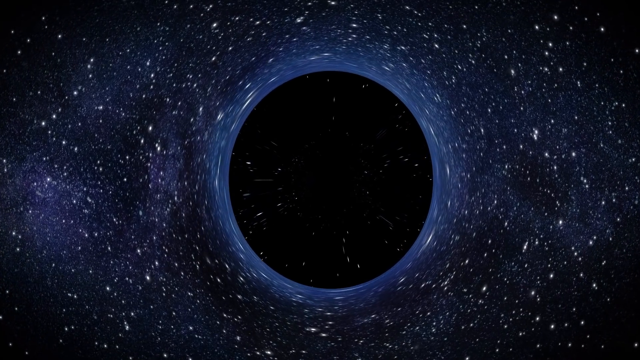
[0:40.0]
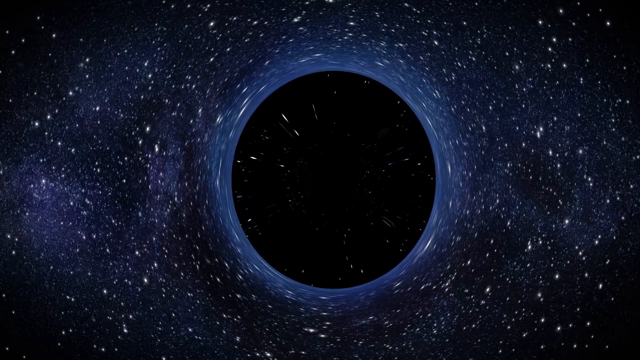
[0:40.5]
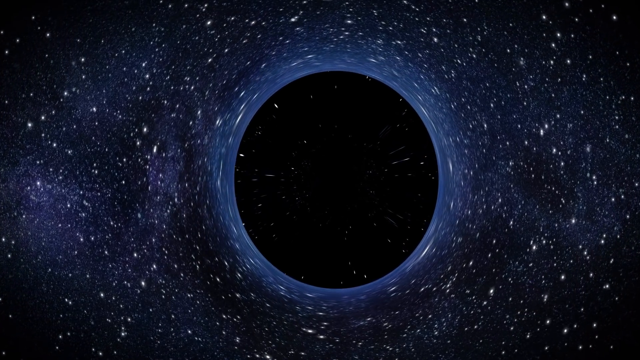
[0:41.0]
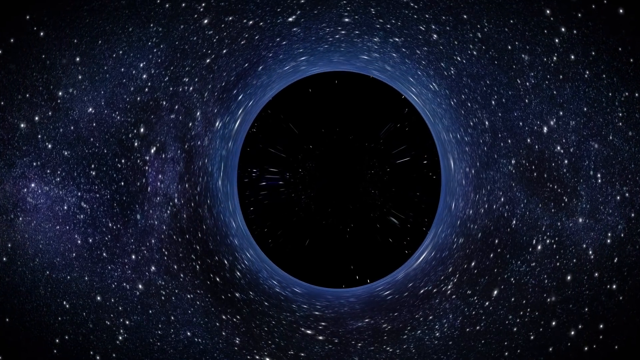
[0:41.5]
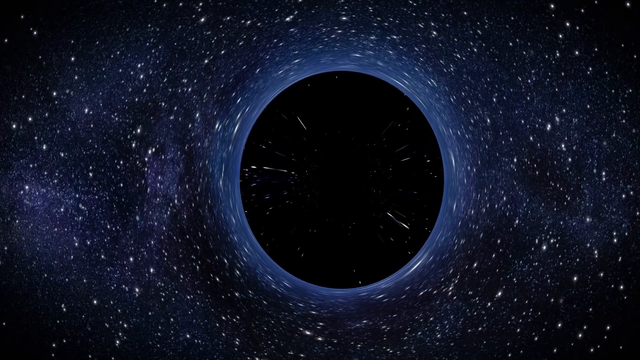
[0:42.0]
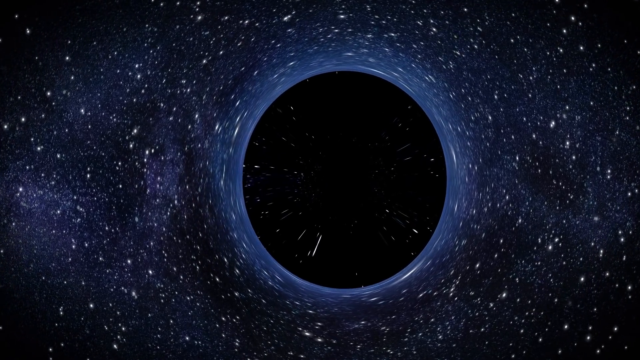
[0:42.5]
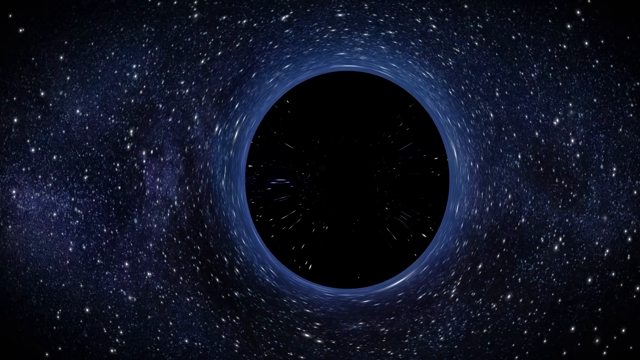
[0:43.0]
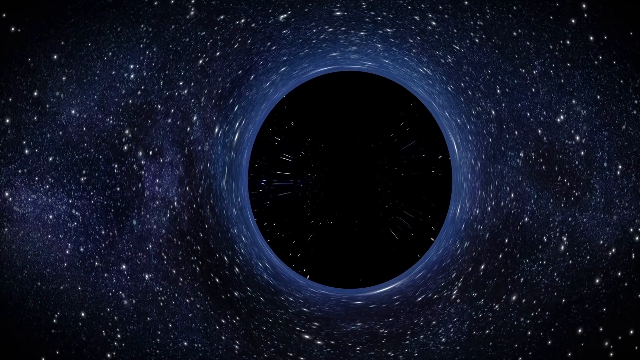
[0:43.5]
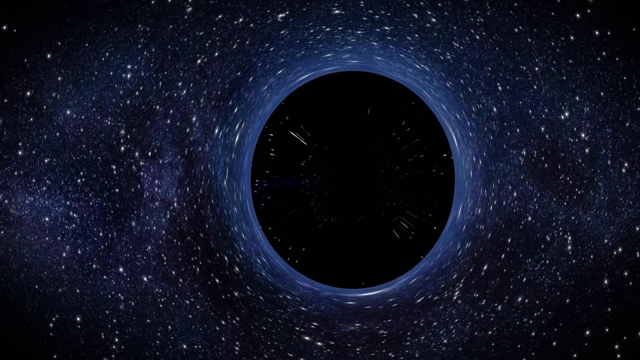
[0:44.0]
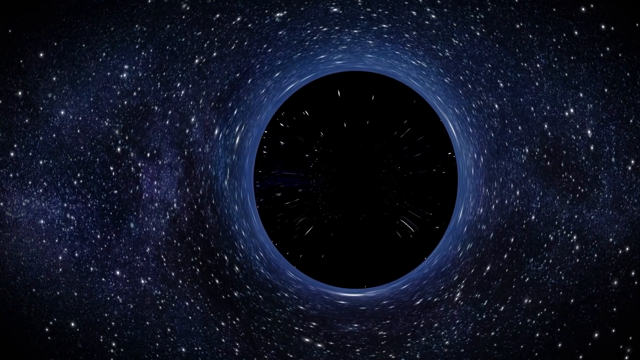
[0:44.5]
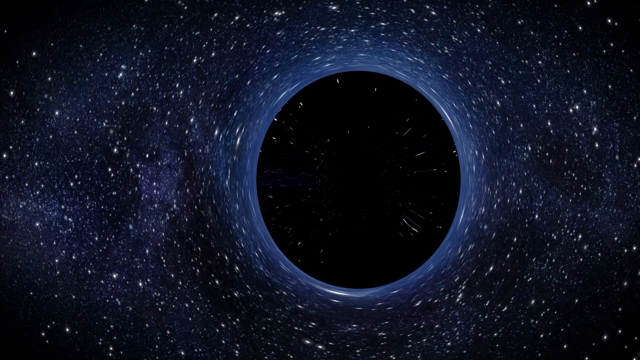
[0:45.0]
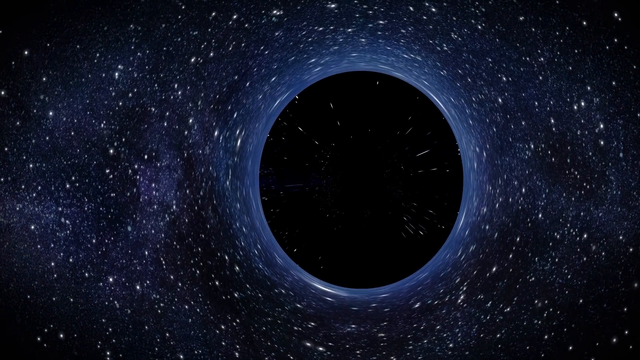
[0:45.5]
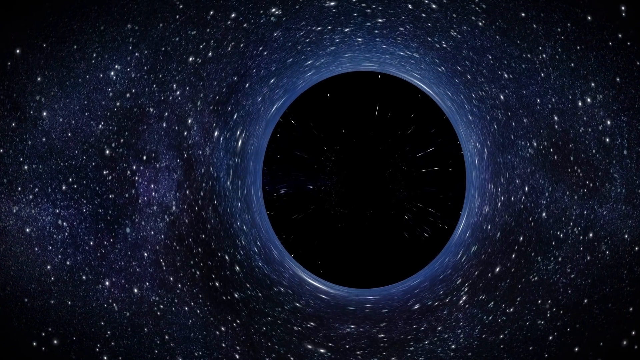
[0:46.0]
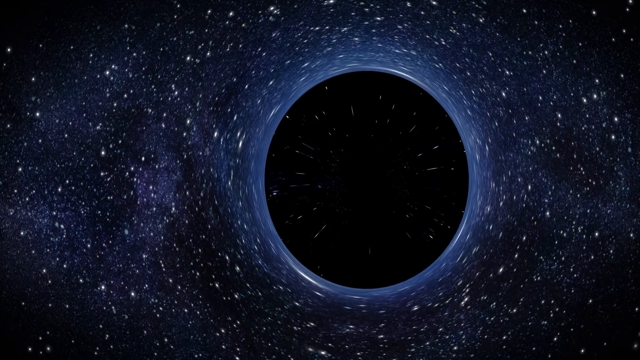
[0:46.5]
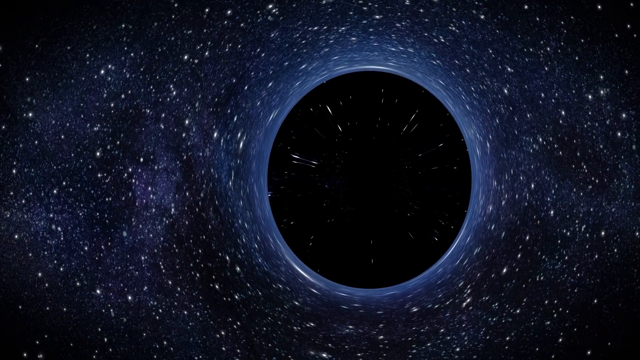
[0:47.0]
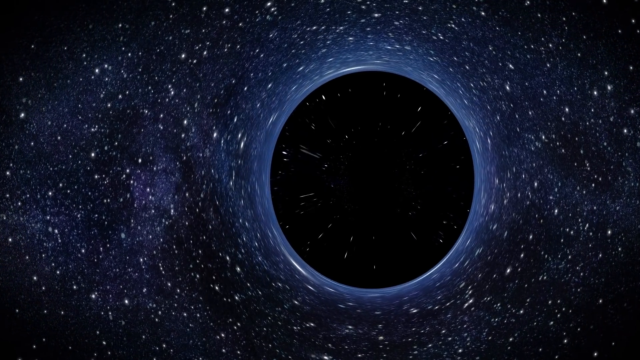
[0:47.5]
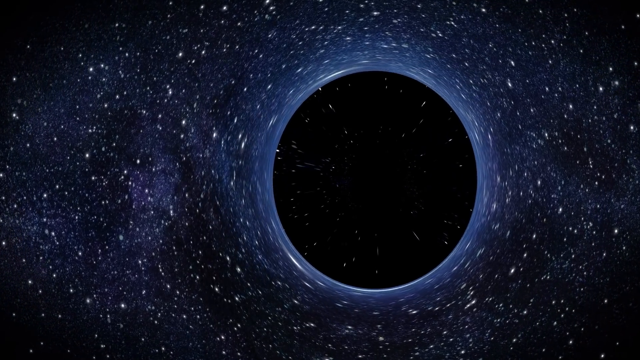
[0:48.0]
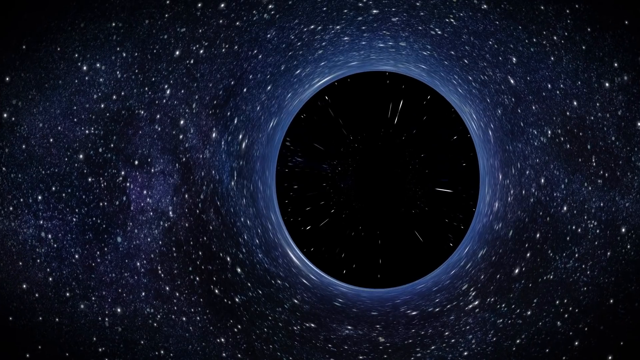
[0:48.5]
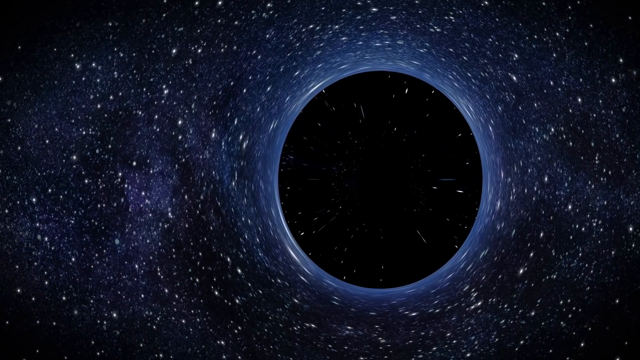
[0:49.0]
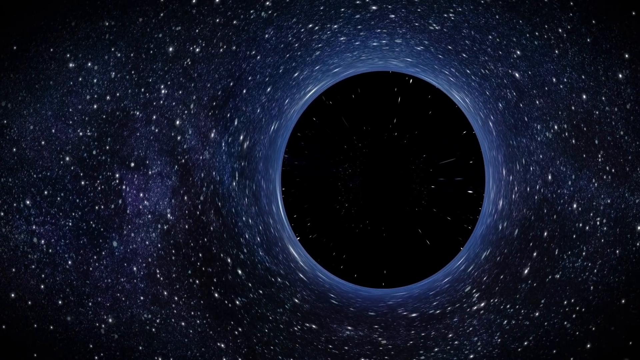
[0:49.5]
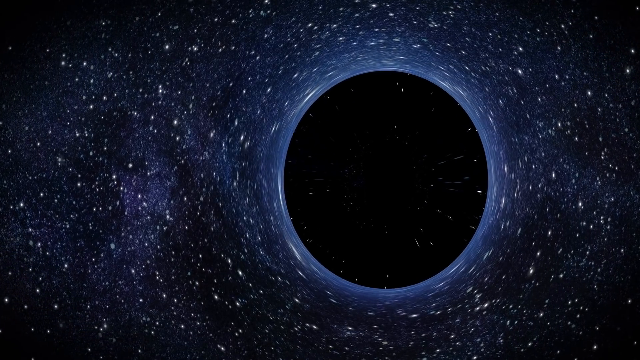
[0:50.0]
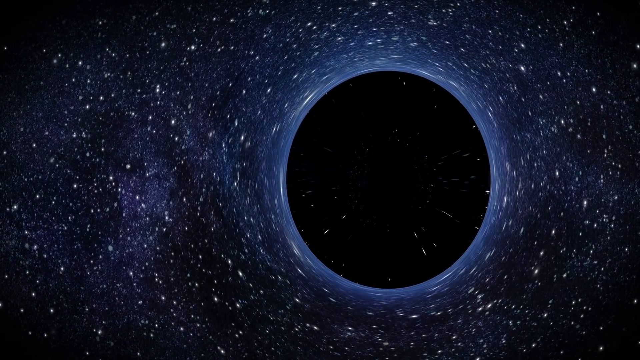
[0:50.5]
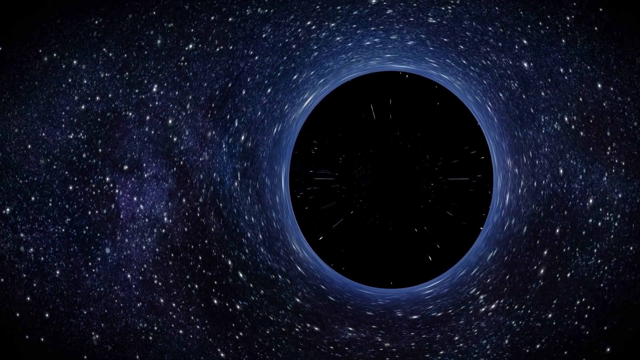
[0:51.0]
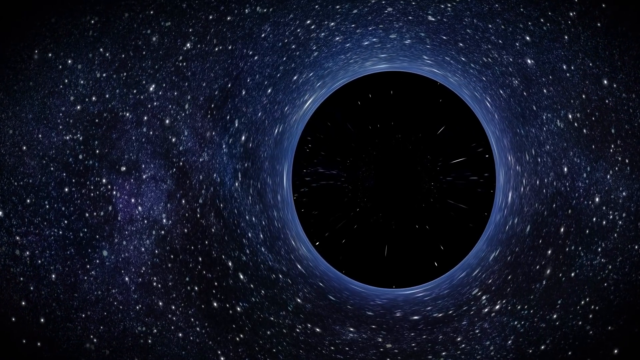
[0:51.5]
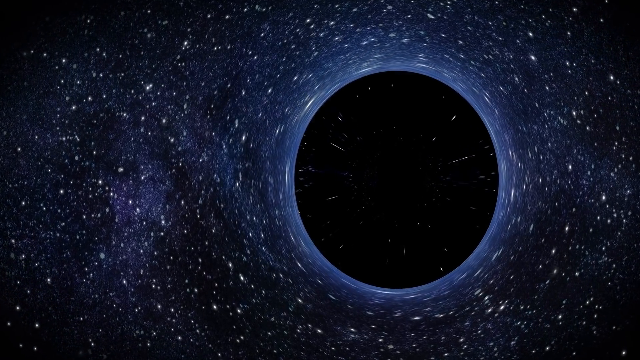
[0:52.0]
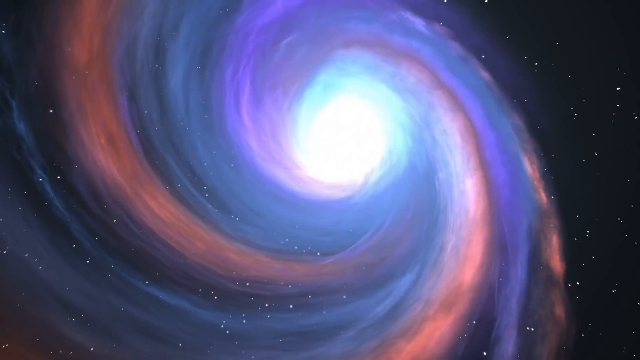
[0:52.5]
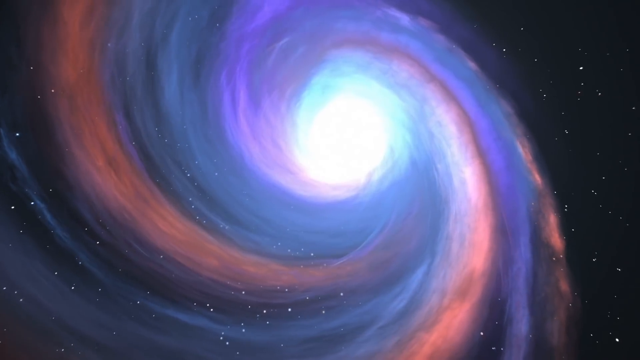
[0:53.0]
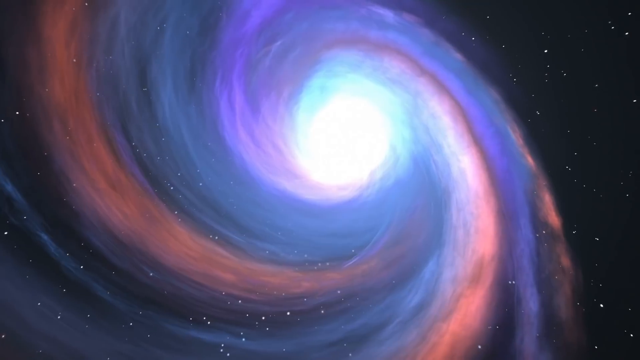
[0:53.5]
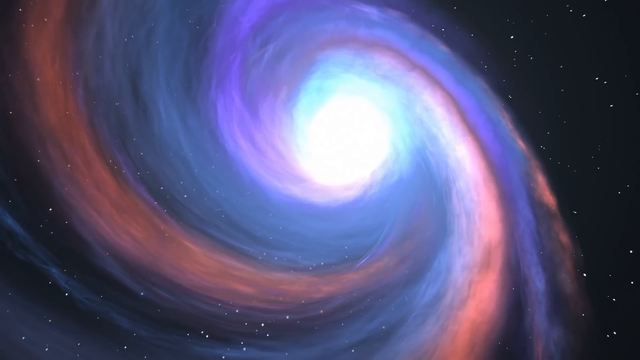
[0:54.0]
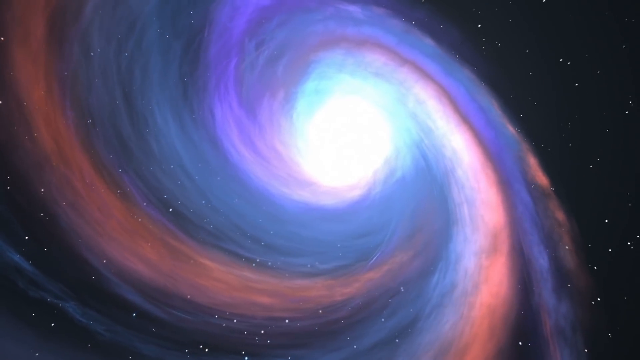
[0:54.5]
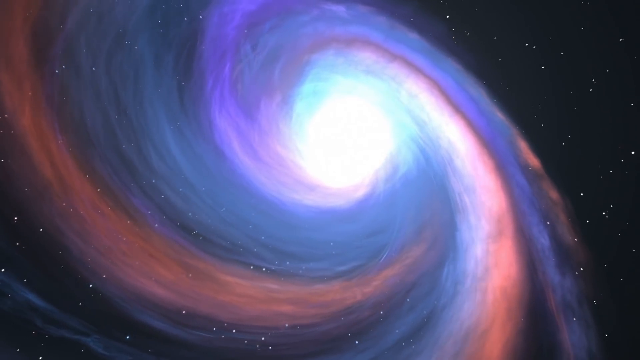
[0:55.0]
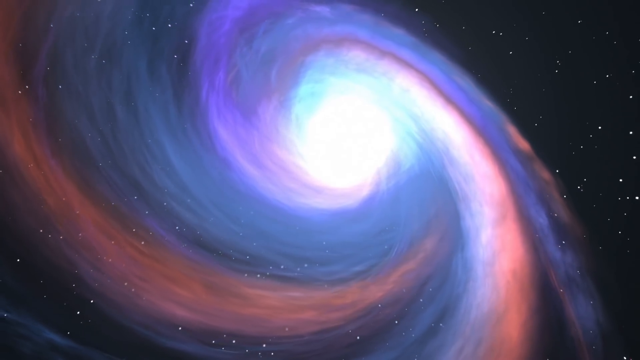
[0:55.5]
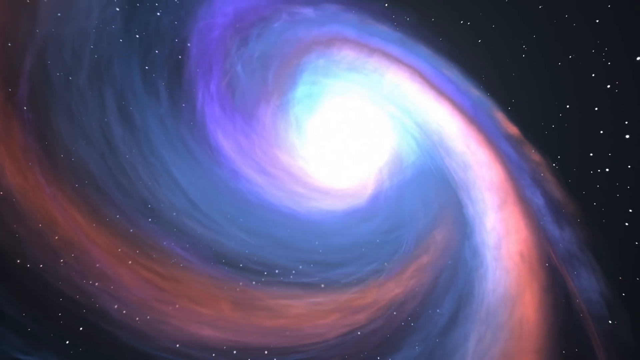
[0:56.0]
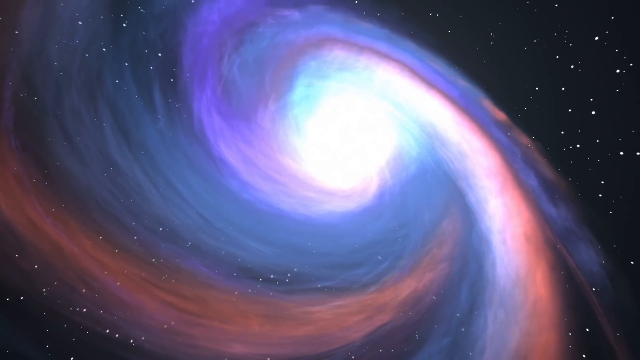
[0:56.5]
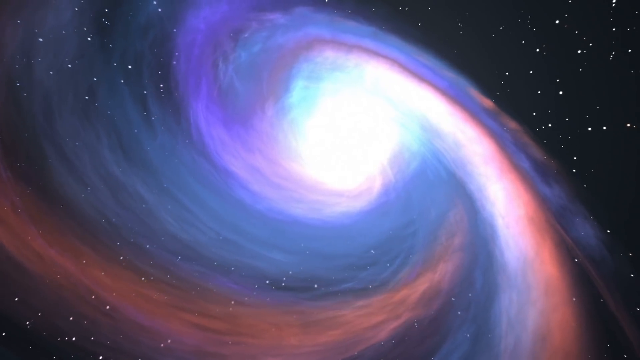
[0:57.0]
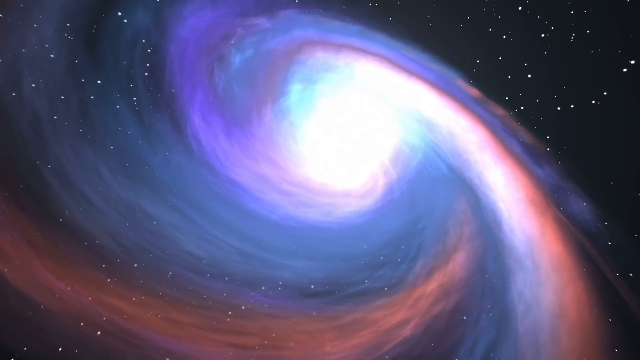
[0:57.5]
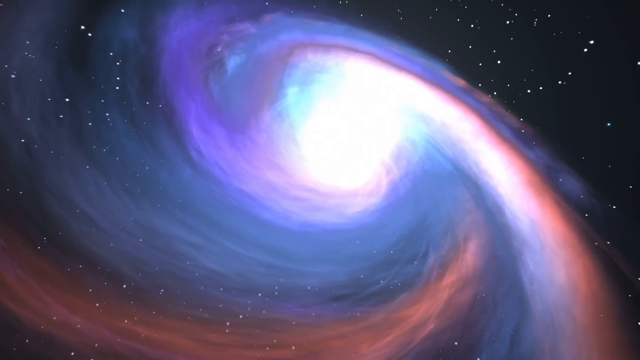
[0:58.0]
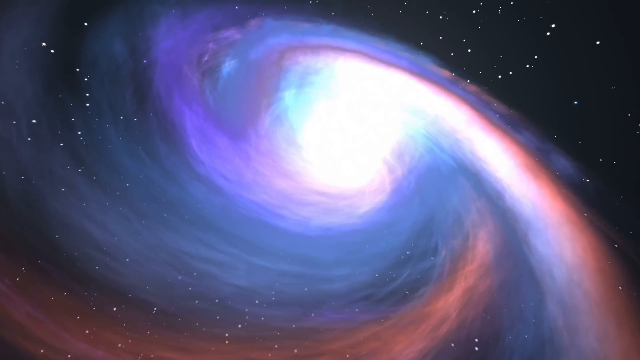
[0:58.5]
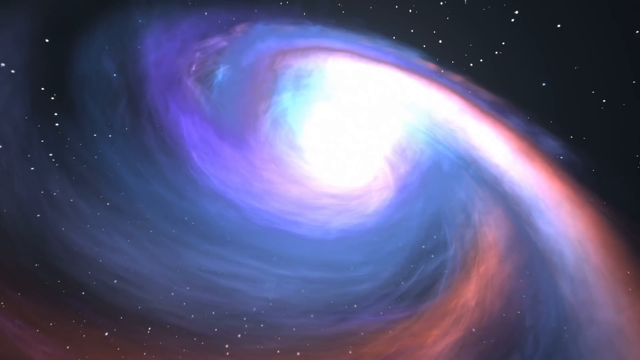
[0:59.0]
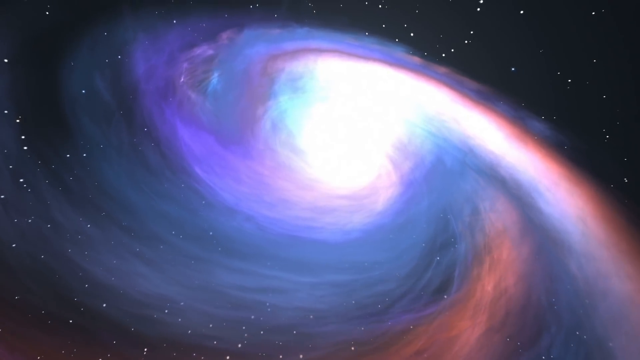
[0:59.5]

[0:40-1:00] The view apparently remains on the galaxy, where the dots, seemingly stars, form a perfect circle around black space. The camera seems to go in a little more, and then it looks reflective, as if the areas in the black hole are bouncing. Then it turns and shows something swirling, resembling a hurricane on a weather map with an eye at its center. Some parts are an orange-red color, then blue, and there is a really bright white ball in the middle. The camera seems to go around this area.